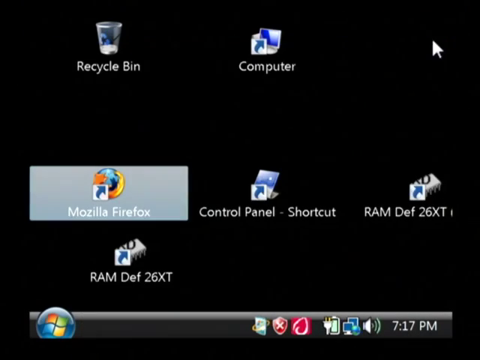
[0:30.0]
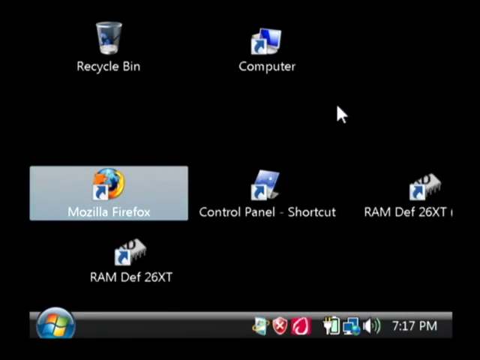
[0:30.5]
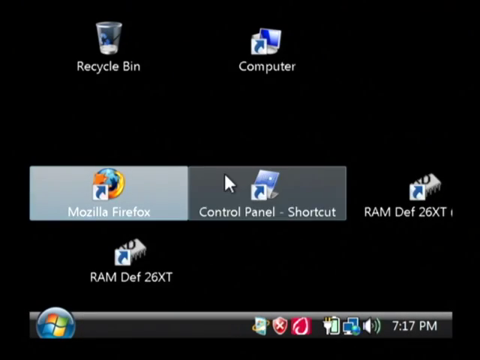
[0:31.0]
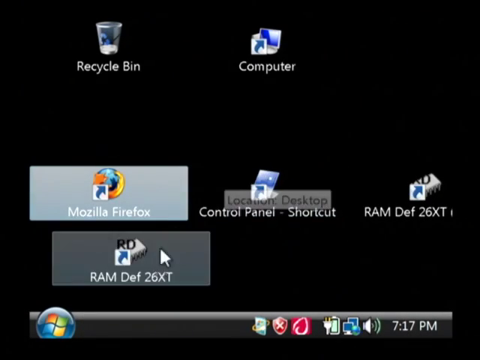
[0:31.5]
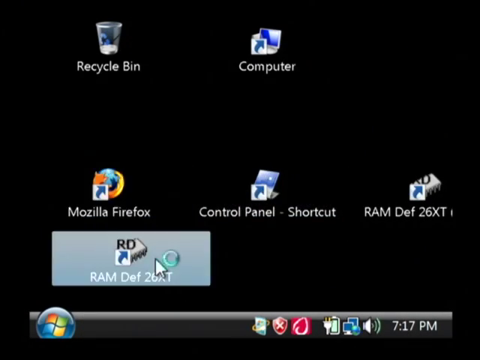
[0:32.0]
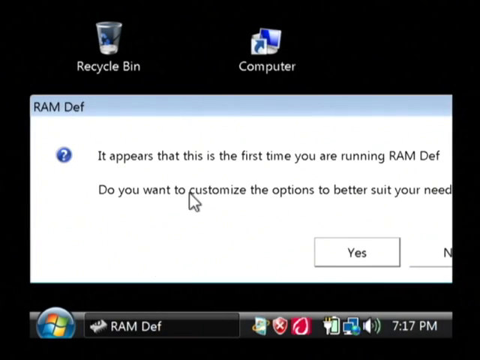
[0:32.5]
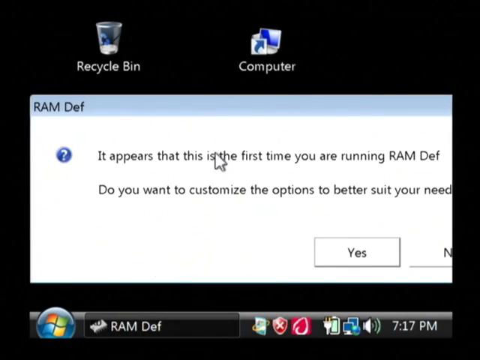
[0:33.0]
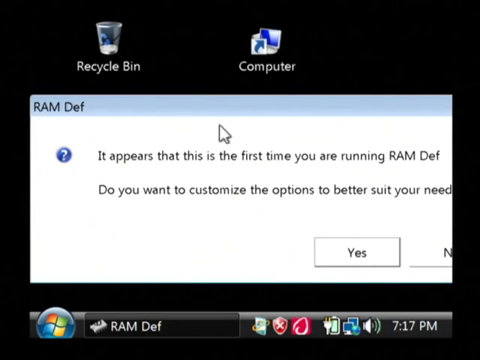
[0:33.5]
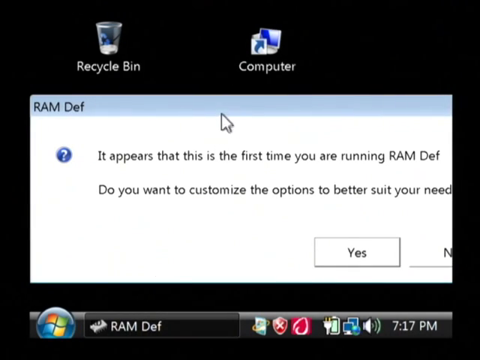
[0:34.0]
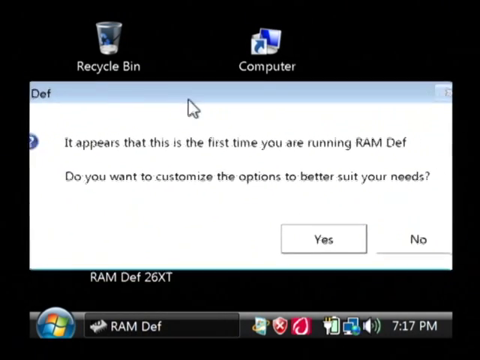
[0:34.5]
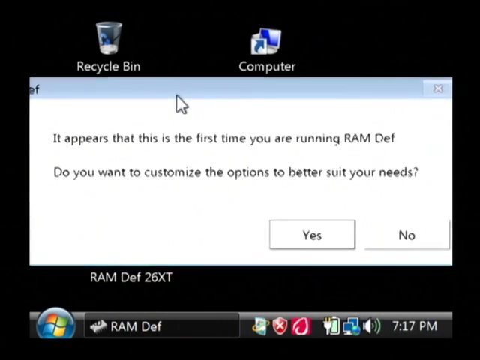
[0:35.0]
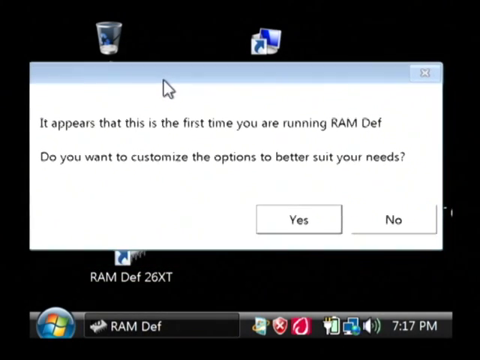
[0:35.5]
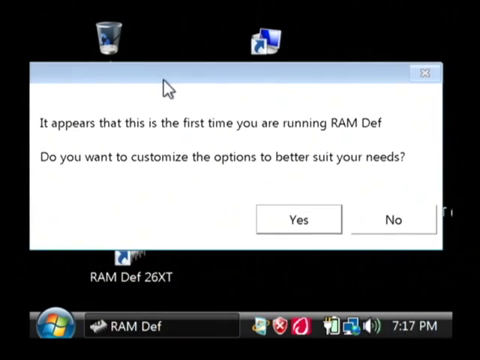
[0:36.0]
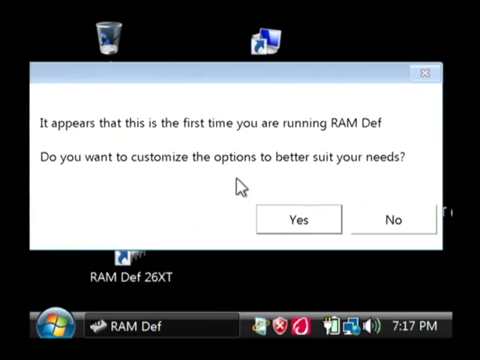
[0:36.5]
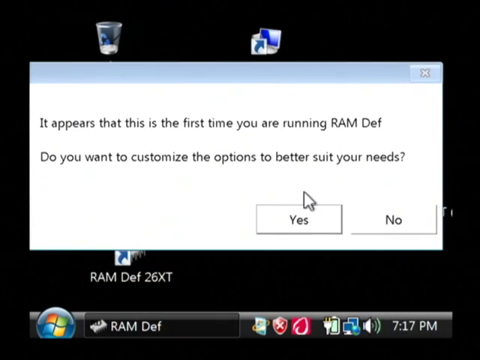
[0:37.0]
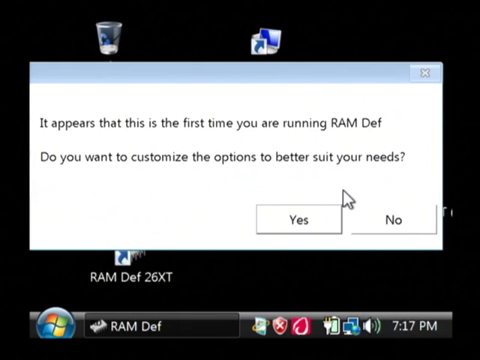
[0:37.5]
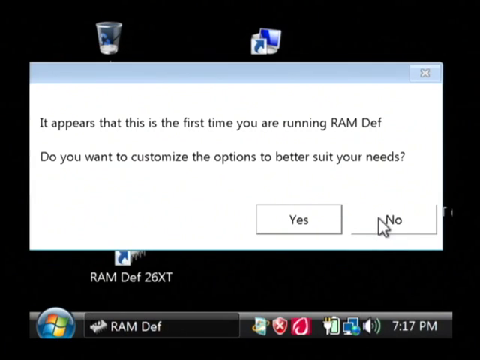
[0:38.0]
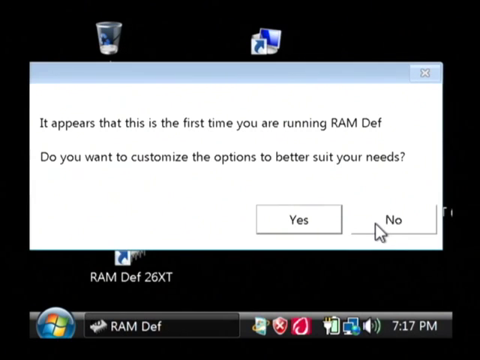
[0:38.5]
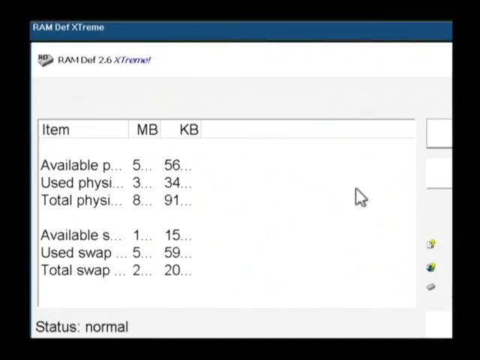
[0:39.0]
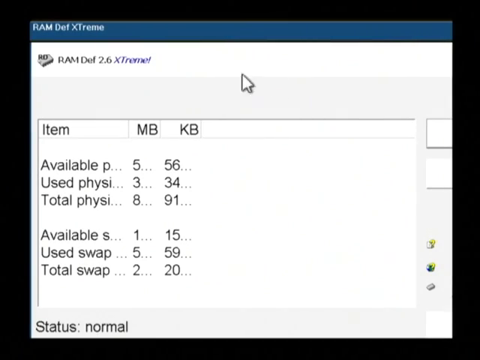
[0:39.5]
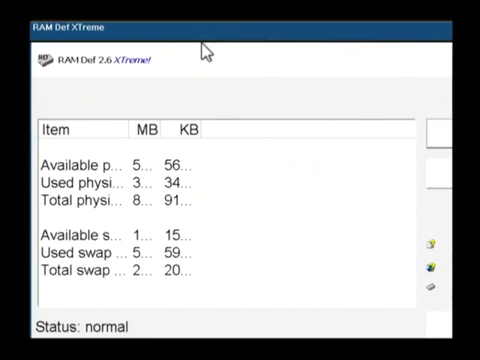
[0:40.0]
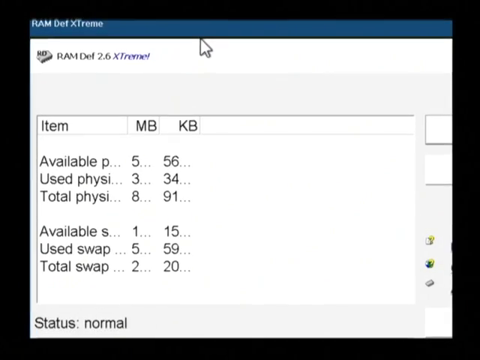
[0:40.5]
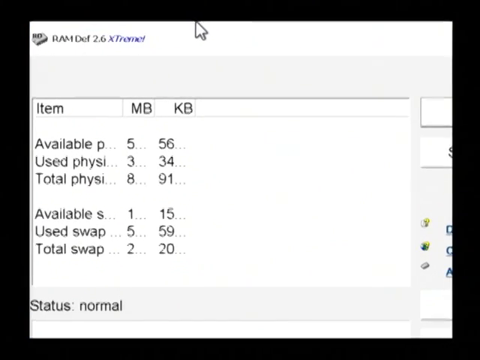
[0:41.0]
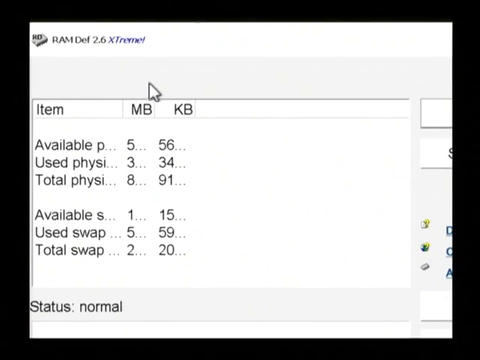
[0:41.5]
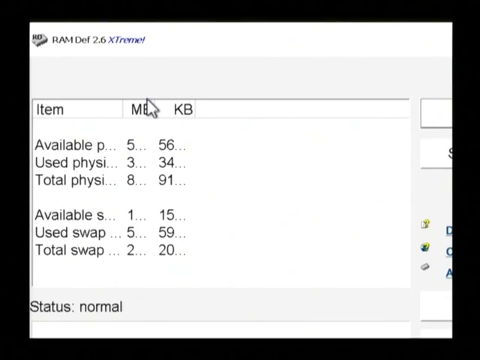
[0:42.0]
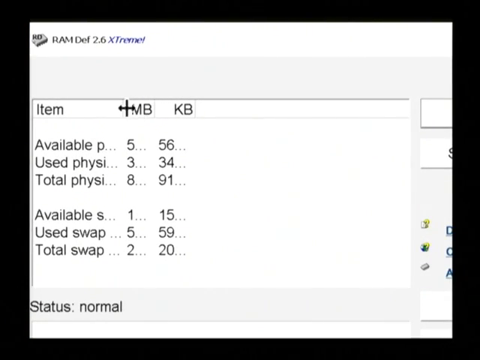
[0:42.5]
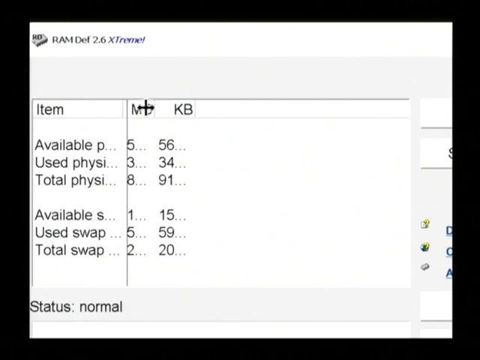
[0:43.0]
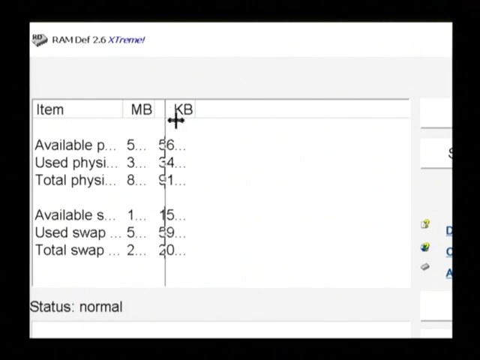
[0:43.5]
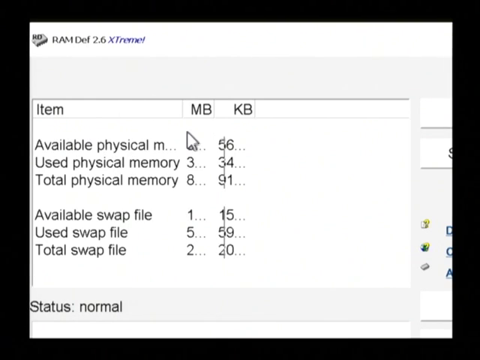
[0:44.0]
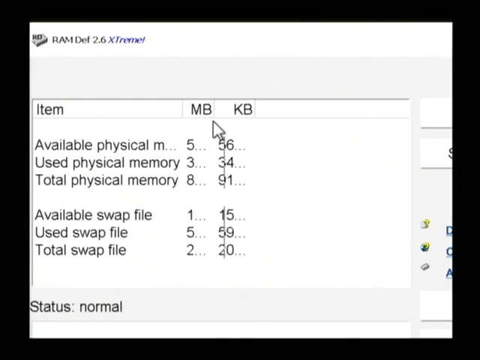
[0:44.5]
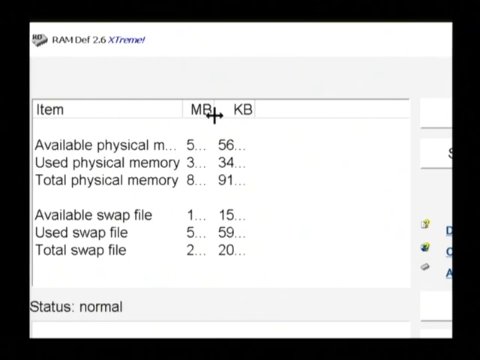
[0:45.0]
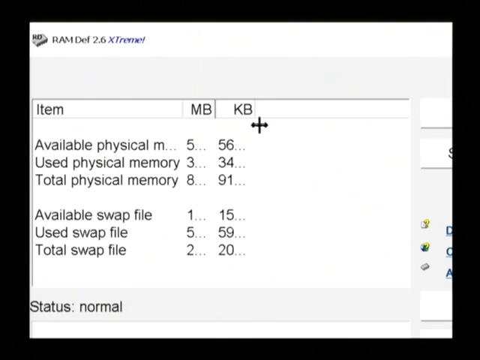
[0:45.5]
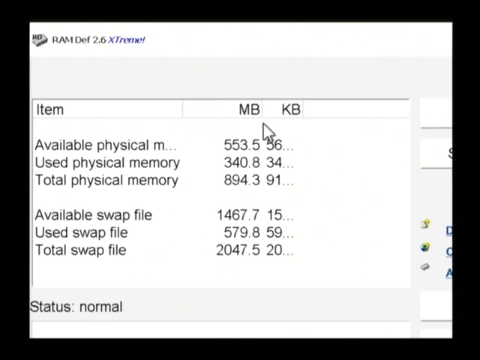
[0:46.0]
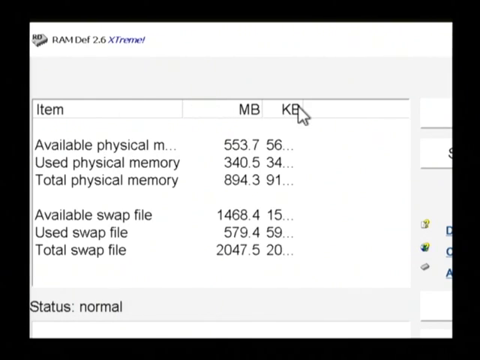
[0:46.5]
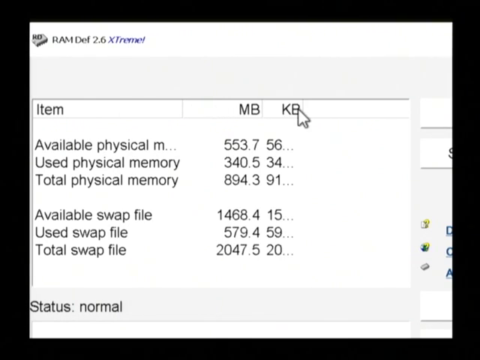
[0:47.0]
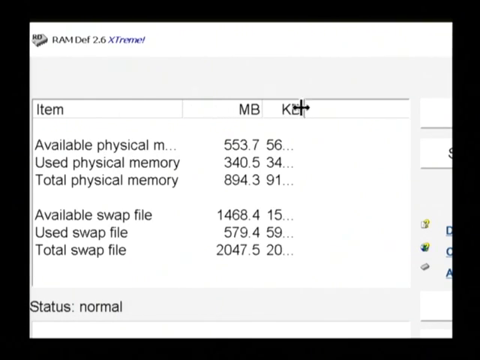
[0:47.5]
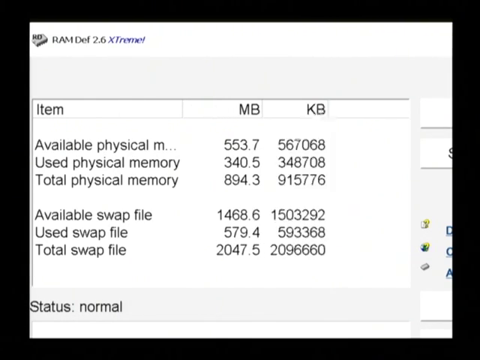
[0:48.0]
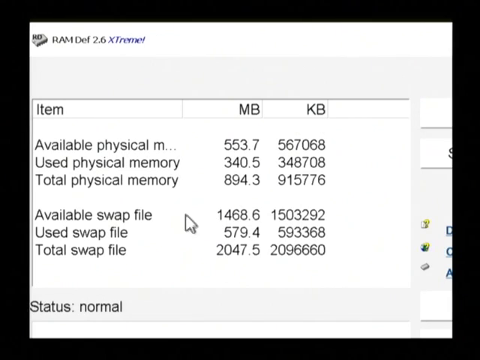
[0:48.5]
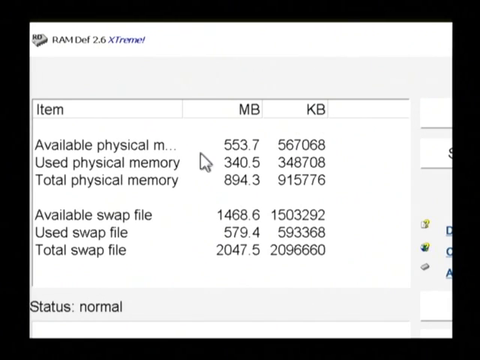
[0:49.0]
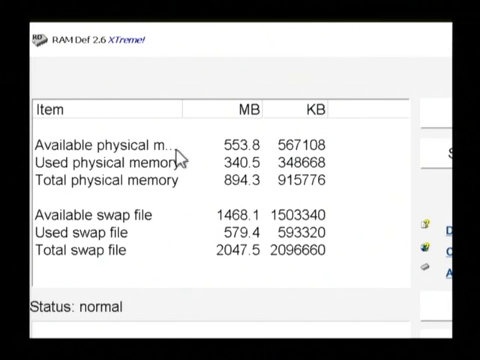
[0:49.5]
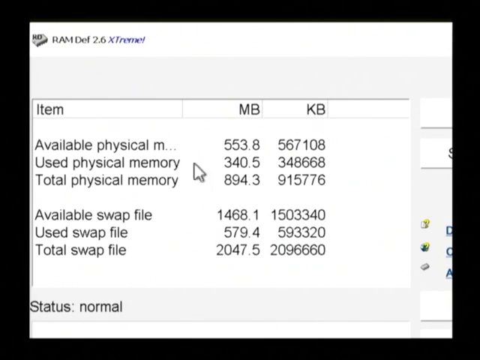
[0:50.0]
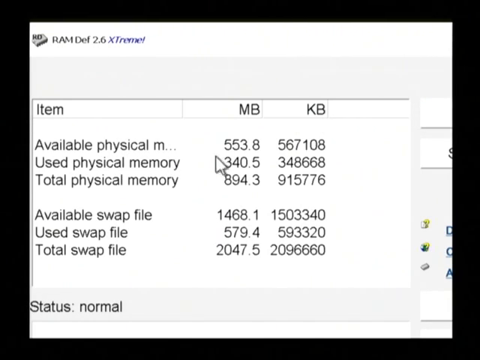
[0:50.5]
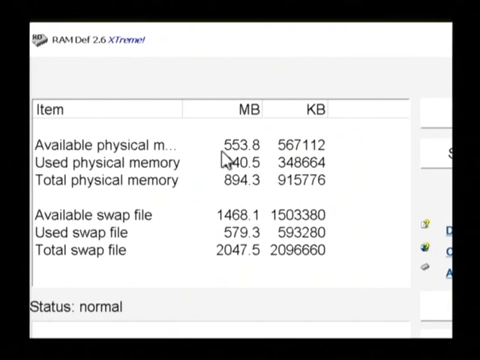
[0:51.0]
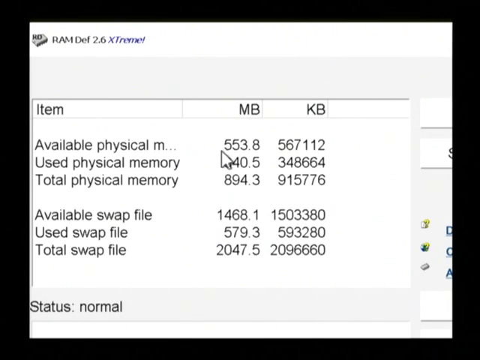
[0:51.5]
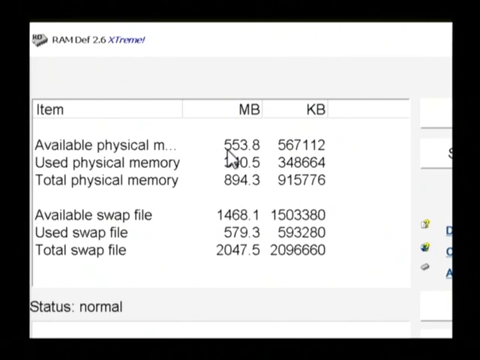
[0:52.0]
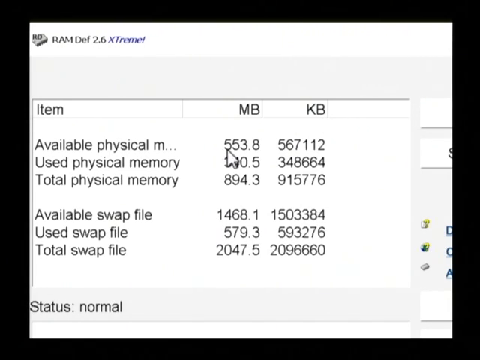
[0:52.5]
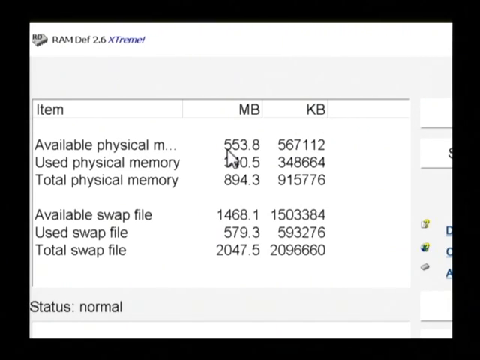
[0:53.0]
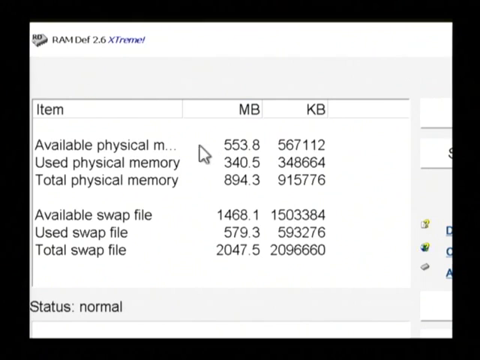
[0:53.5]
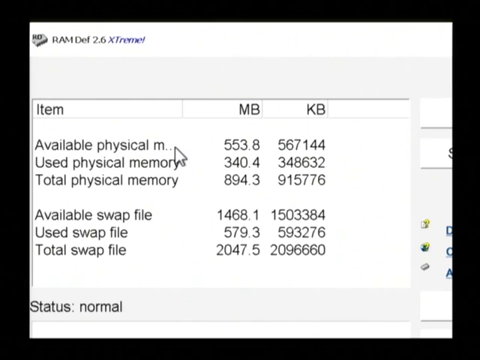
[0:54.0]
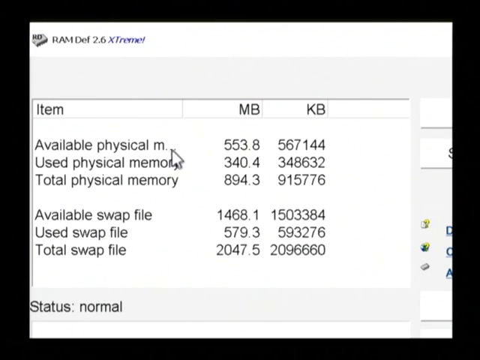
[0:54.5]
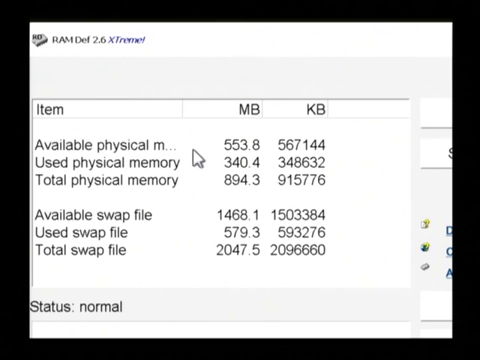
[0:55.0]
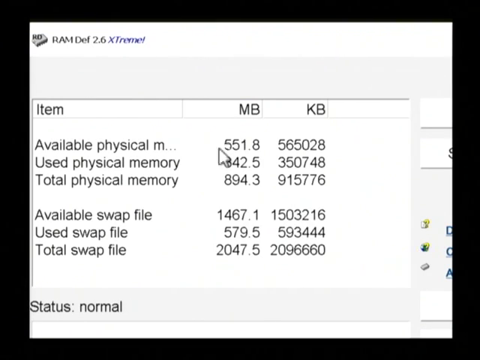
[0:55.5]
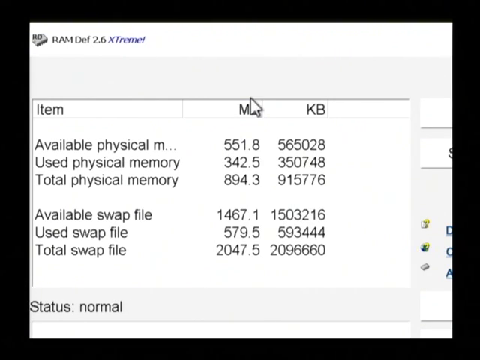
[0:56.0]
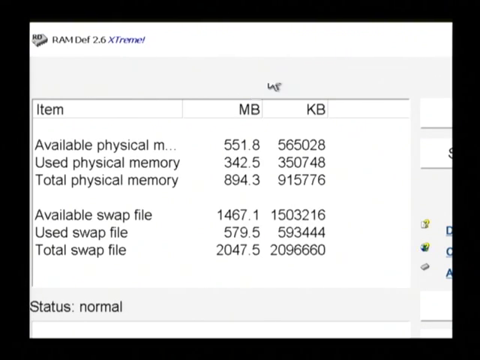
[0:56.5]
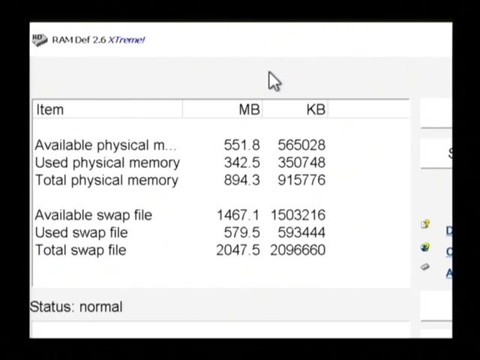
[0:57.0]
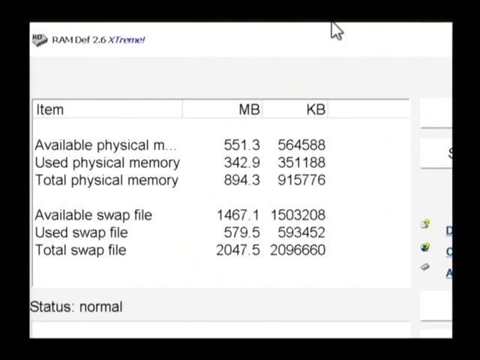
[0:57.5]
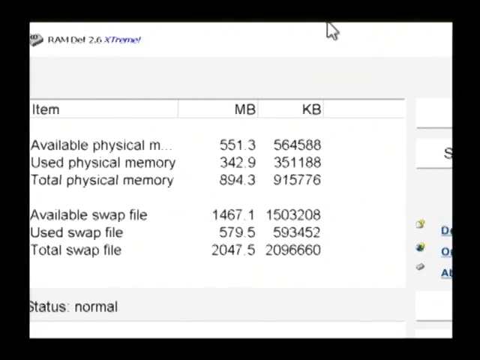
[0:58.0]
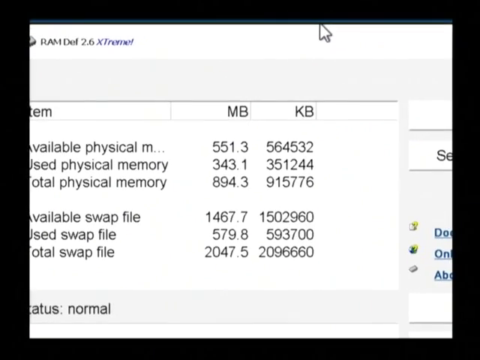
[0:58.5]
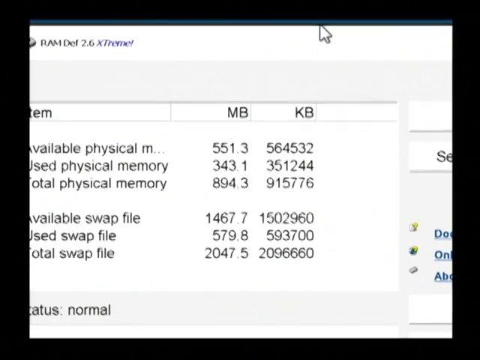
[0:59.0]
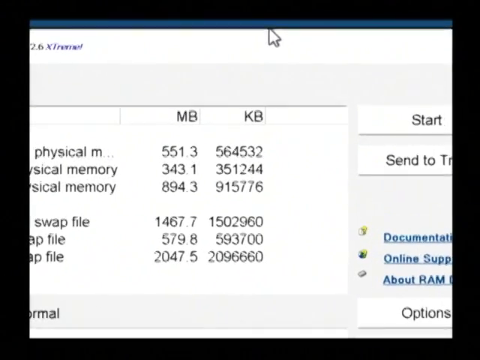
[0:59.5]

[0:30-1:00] A blacked-out desktop appears with very zoomed-in icons. Recycle Bin is at the top left and Computer is in the center, with the mouse cursor at the top right, almost as large as an icon. On the next row down are Mozilla Firefox on the left, Control Panel in the center and RAMDEF on the right, and on the bottom row there is another RAMDEF label. The author quickly moves the mouse down to the RAMDEF at the bottom. A message pops up: "It appears that this is the first time you're running RAM def. Do you want to customize the options to better suit your needs," and the author clicks no. RAMDEF then shows a breakdown of available physical memory, used physical memory, total physical memory, available swap files, used swap files and total swap files. The author slides the spacer side to side so the information can be seen more clearly.